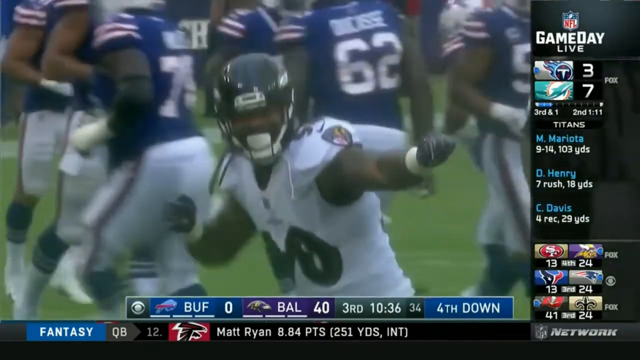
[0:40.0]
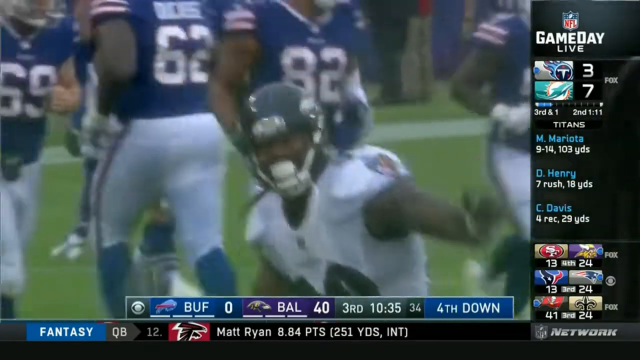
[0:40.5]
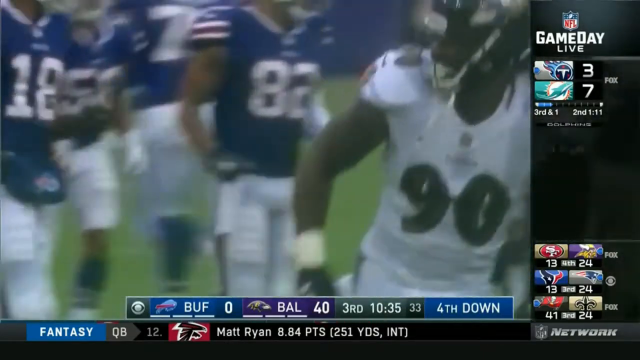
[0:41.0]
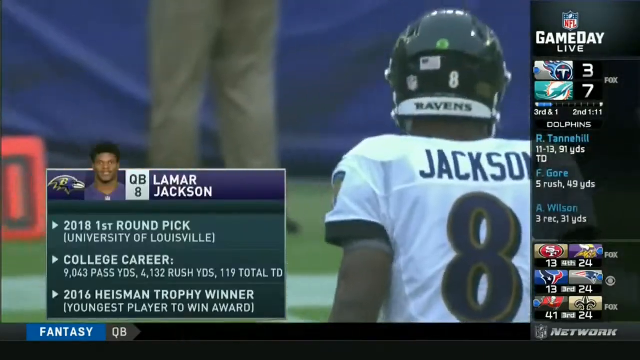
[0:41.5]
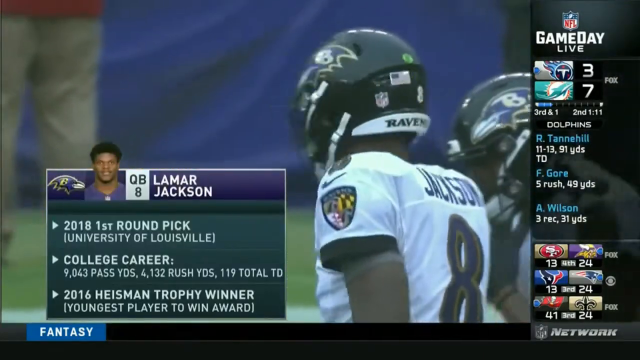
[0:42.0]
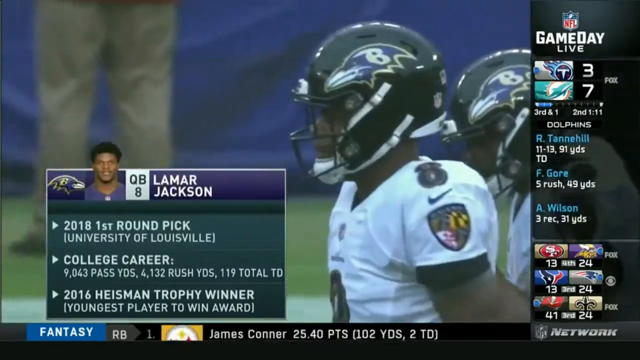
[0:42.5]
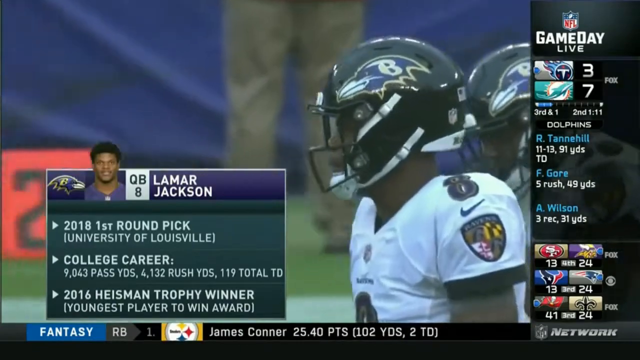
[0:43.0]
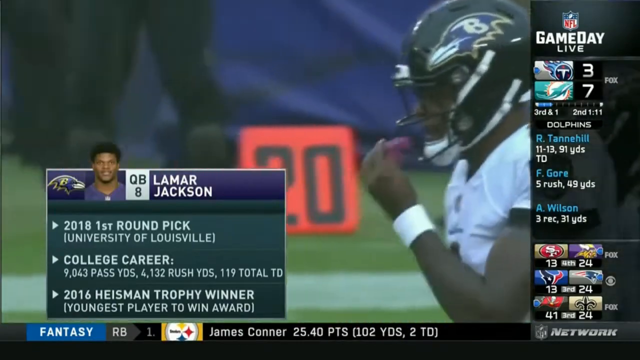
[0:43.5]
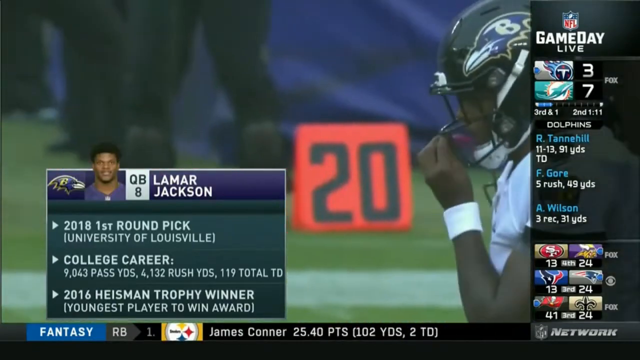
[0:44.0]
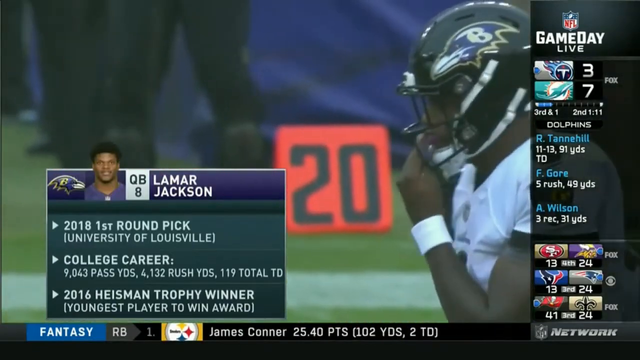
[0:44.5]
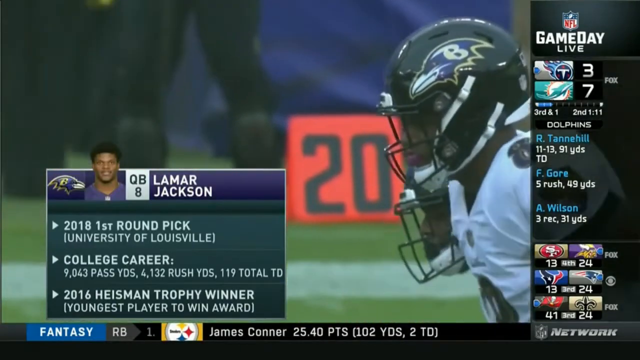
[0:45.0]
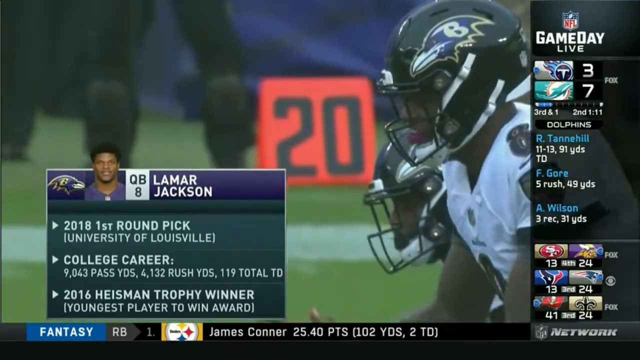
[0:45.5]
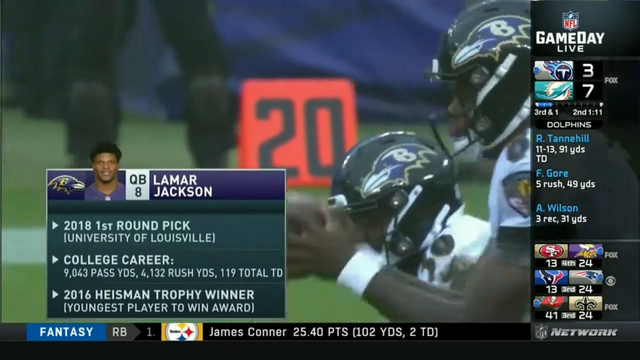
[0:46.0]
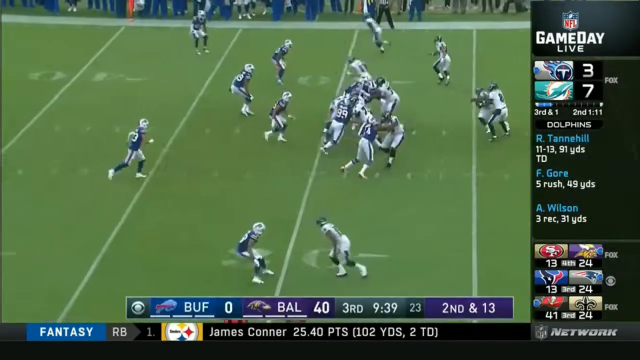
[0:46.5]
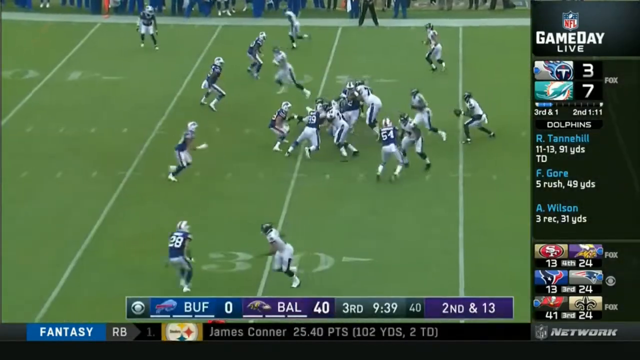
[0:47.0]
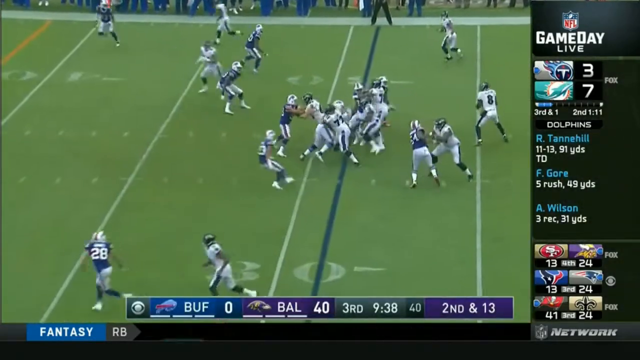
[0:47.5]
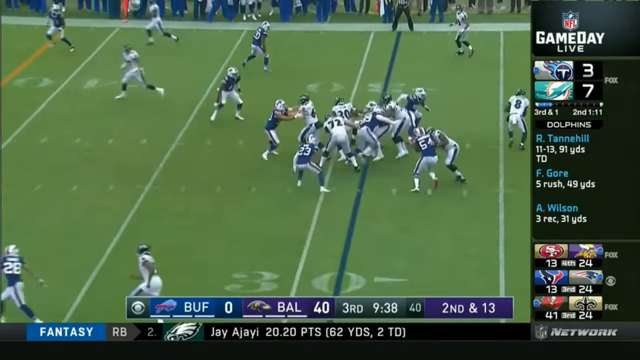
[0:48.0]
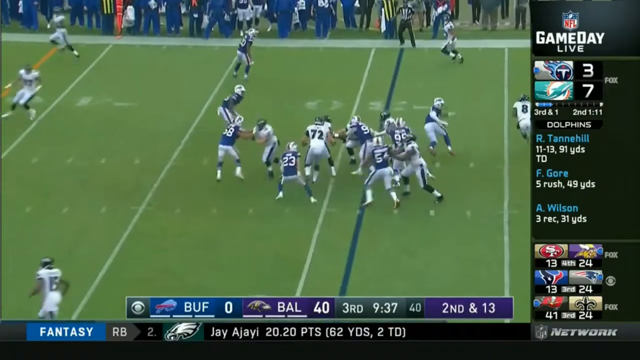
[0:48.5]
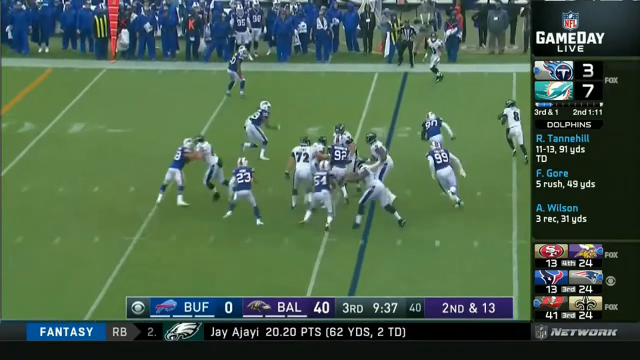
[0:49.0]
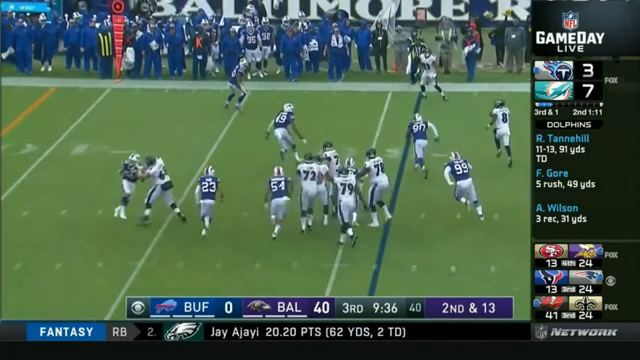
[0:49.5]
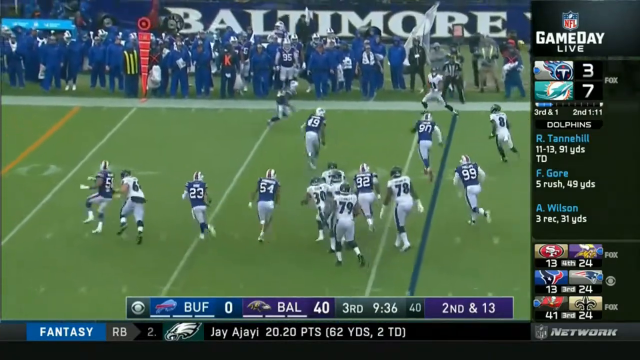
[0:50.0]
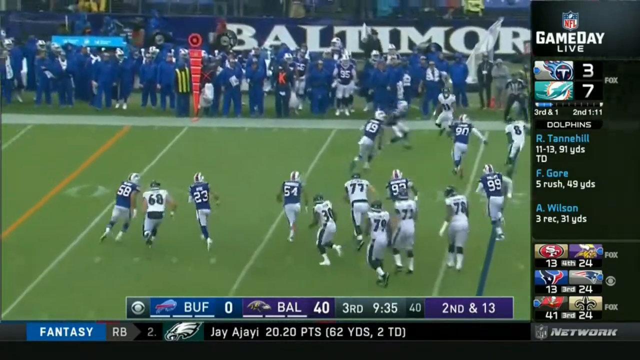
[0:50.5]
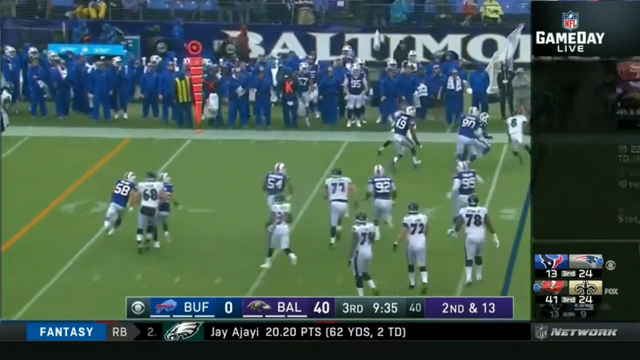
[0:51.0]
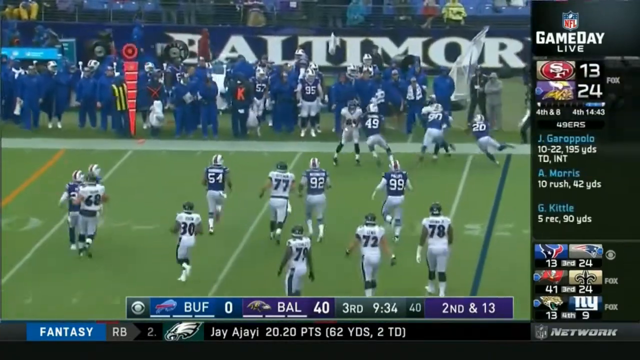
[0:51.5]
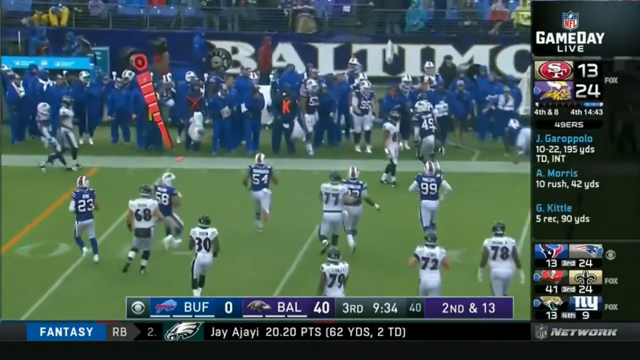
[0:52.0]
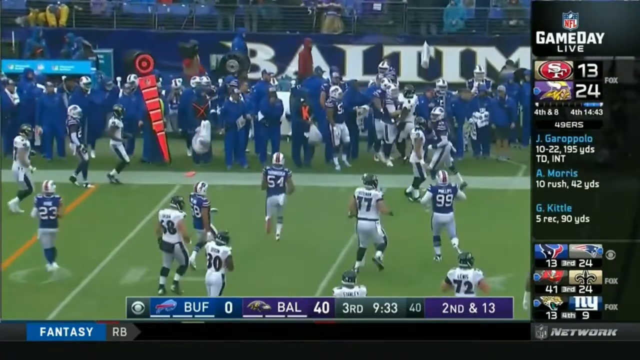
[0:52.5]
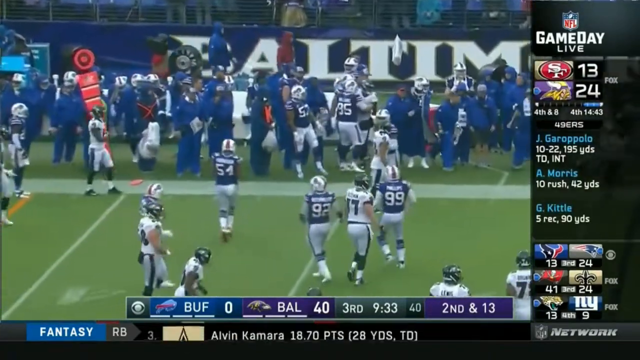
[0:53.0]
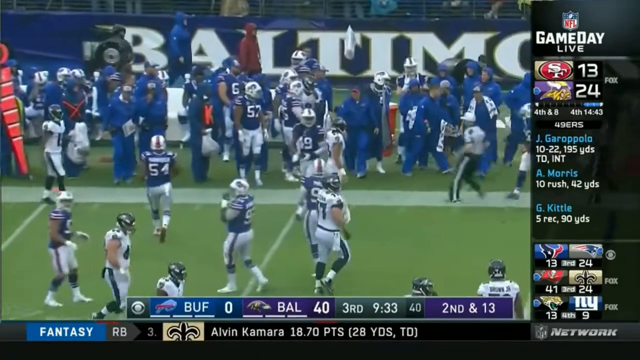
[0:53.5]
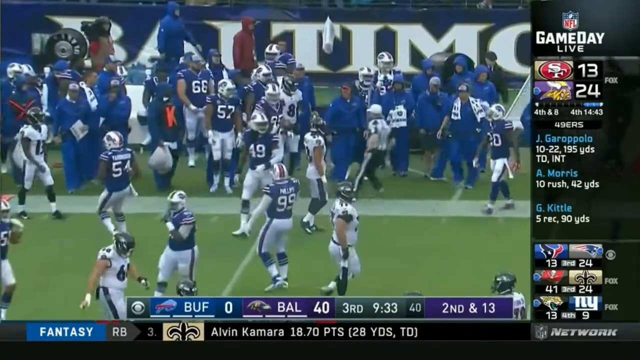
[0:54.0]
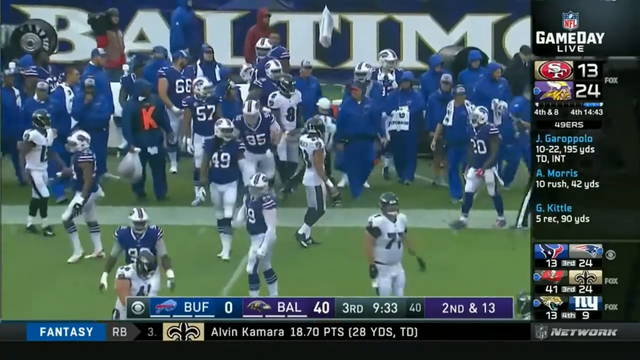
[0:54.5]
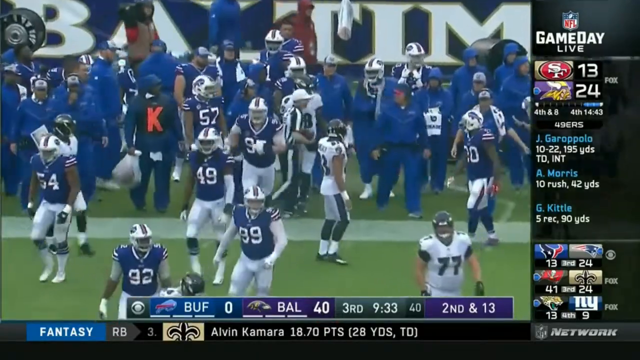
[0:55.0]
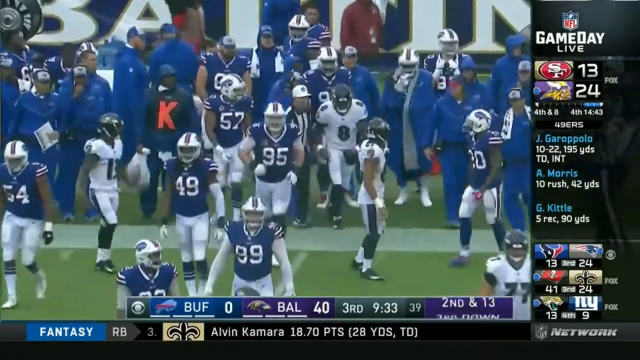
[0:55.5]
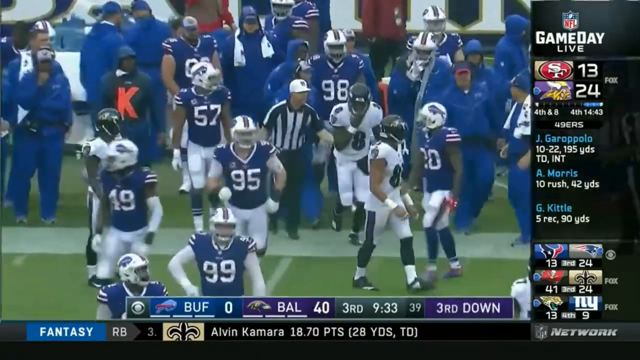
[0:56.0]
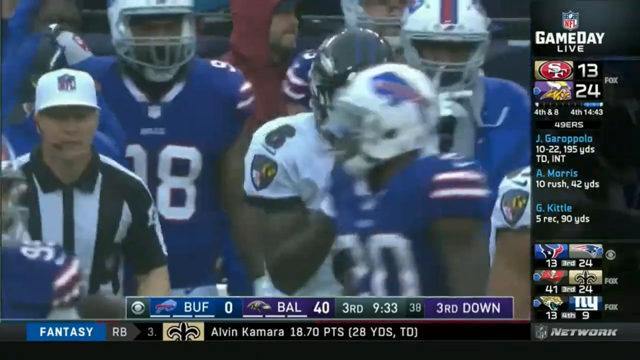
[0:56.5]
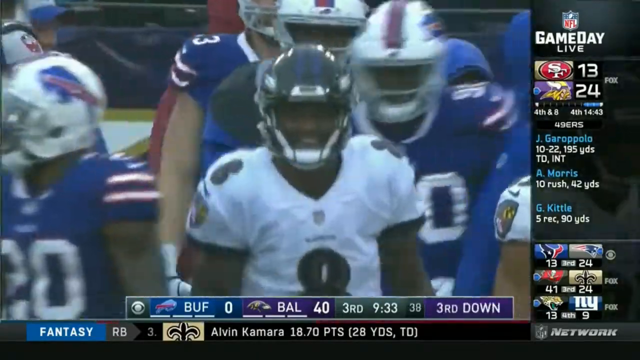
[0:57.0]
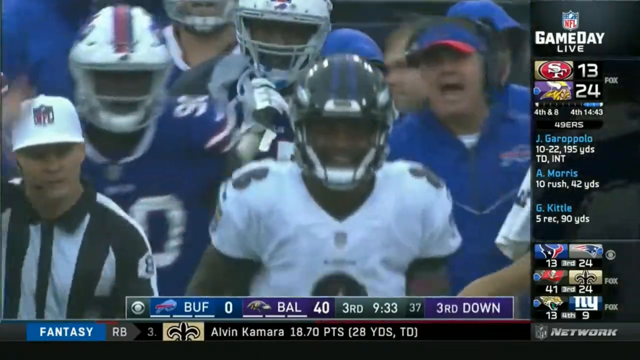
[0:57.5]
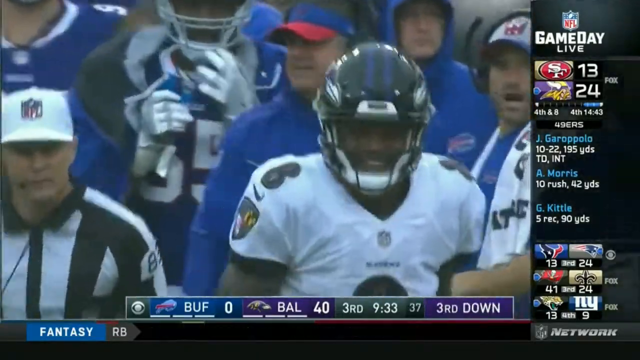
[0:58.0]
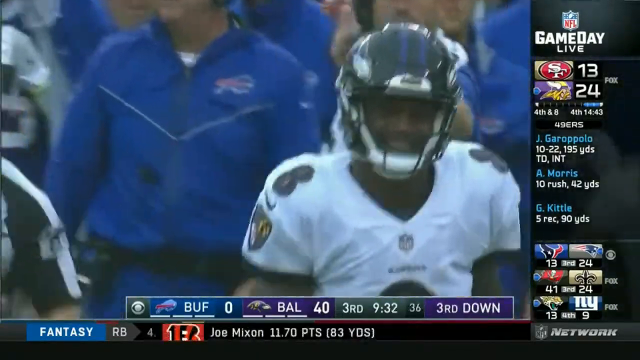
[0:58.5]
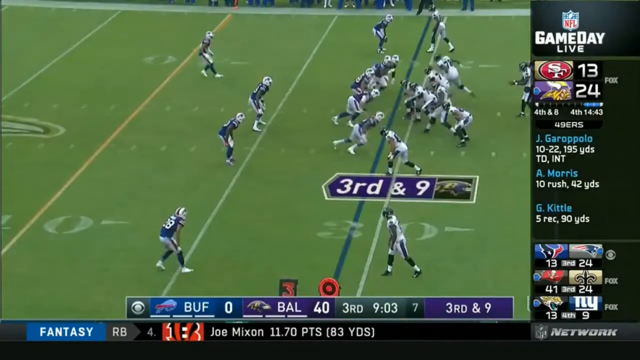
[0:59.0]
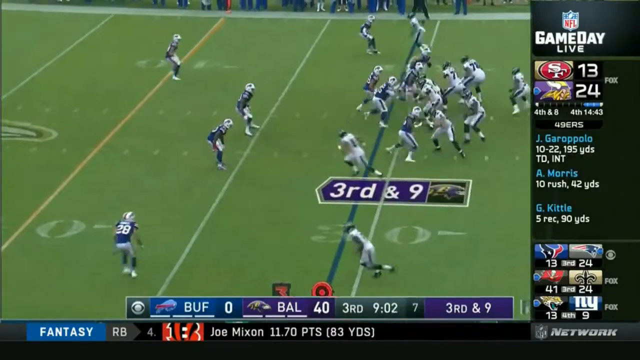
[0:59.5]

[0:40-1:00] Number 90 continues in a sort of mocking riding position. A graphic shows the Baltimore quarterback, Lamar Jackson: 2018 first-round pick from the University of Louisville, with a college career of 9,043 passing yards, 4,132 rushing yards and 119 total touchdowns, and the 2016 Heisman Trophy winner, the youngest player to win the award at that time. Jackson sort of adjusts his mouth guard as he gets passed the football. The camera zooms out as he sort of looks around, and a Buffalo player who has breached the defense sort of tries to cover him. Jackson runs toward his right, up the field, and gets sort of pushed out of bounds by two Buffalo defenders. He sort of runs back, and a referee runs in to help get him out. It seems he ran into the Buffalo team's side, but they only sort of push him away. Another play begins: third and ninth for Baltimore.